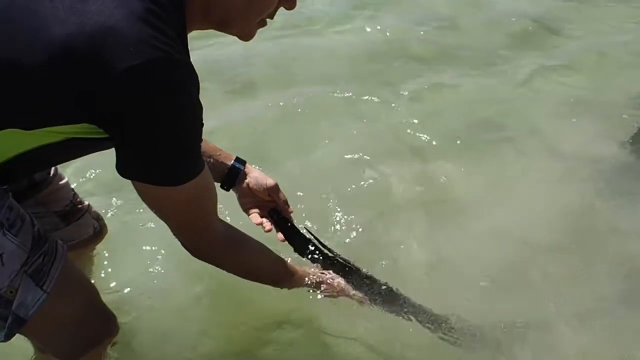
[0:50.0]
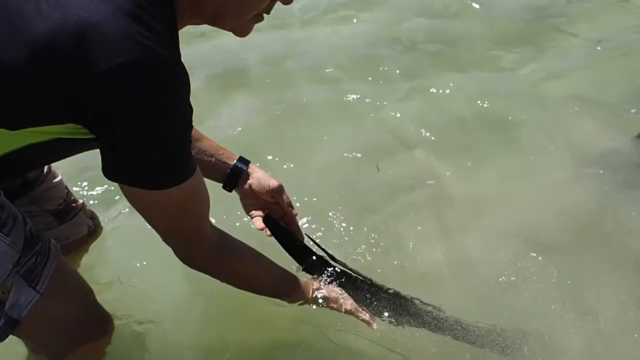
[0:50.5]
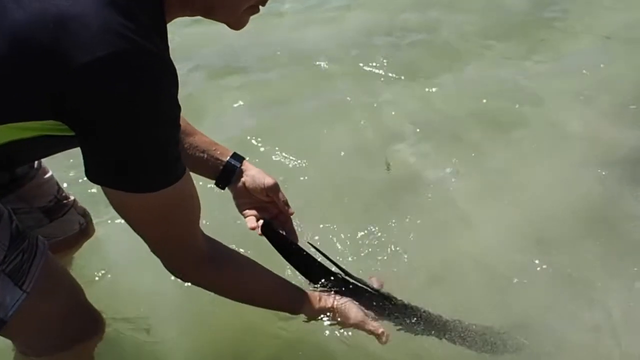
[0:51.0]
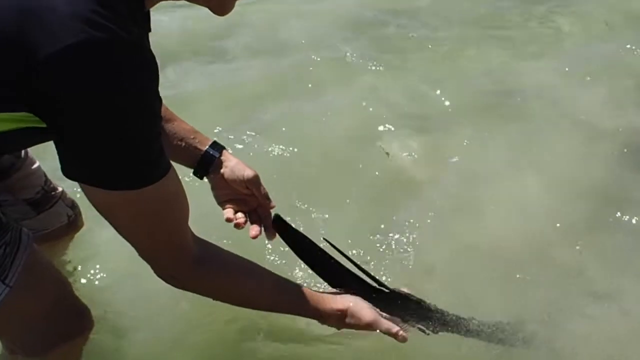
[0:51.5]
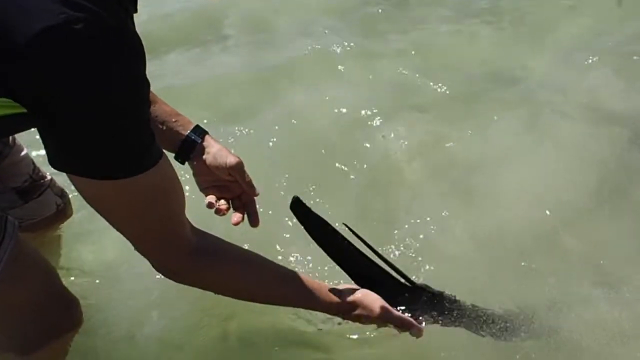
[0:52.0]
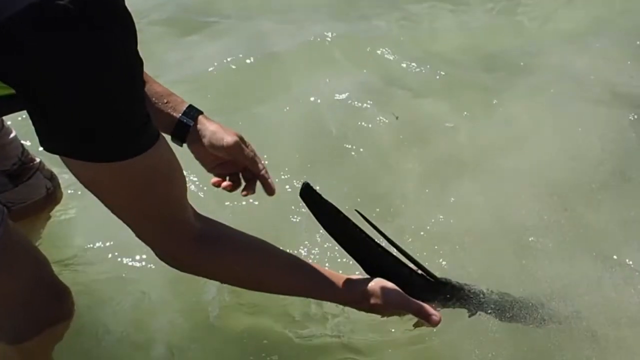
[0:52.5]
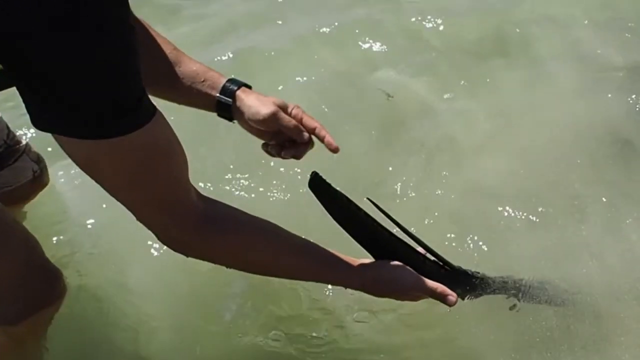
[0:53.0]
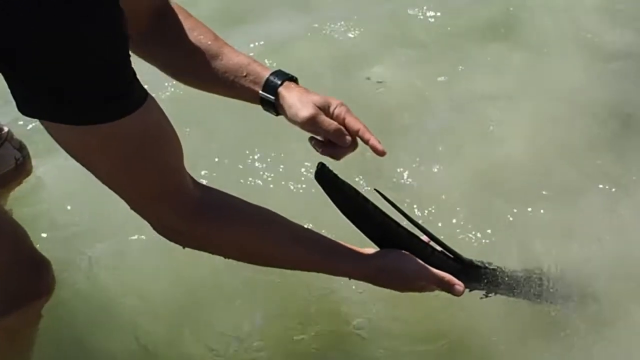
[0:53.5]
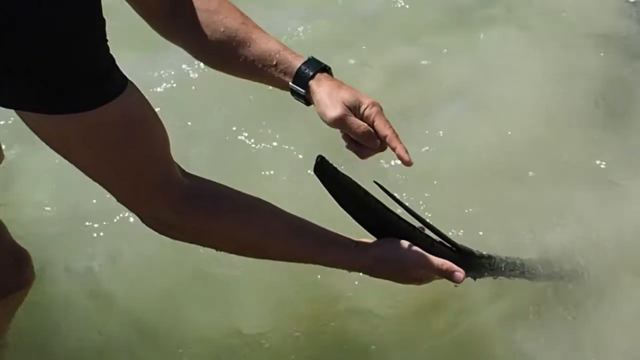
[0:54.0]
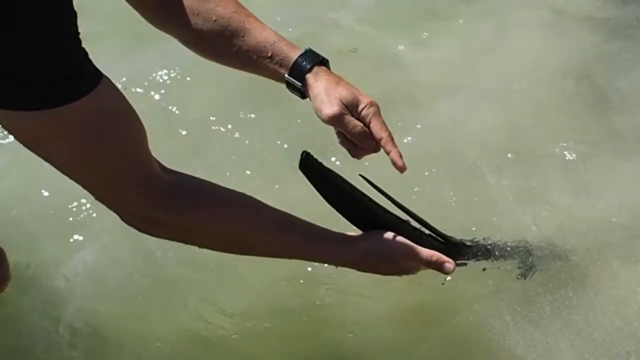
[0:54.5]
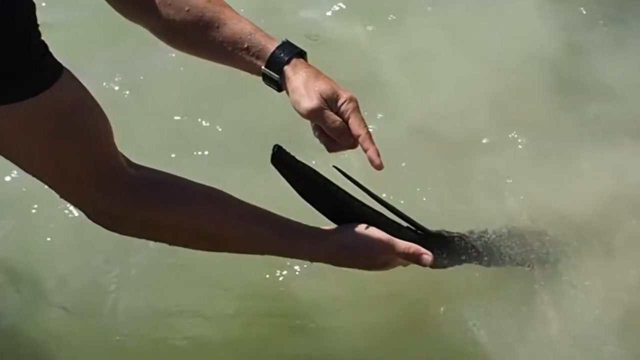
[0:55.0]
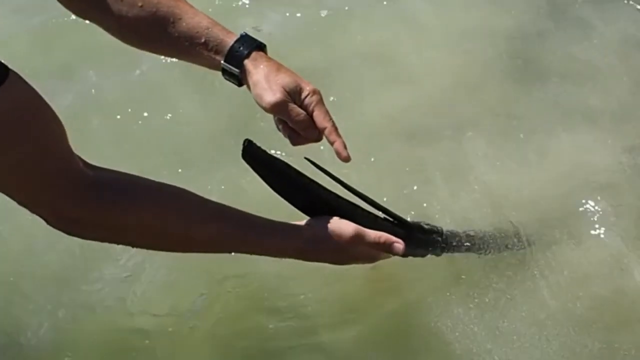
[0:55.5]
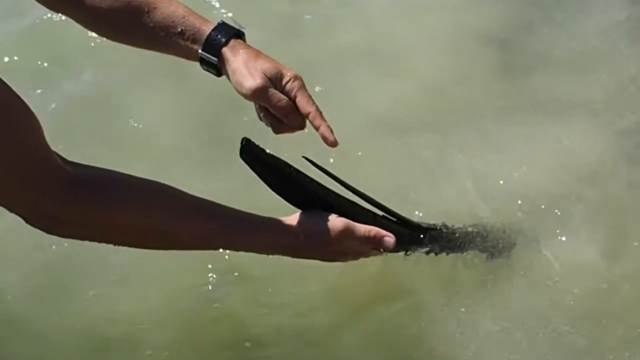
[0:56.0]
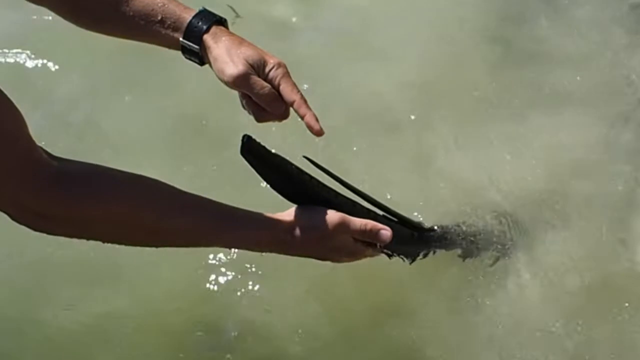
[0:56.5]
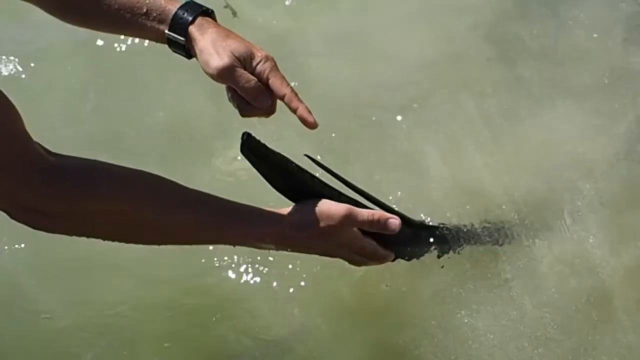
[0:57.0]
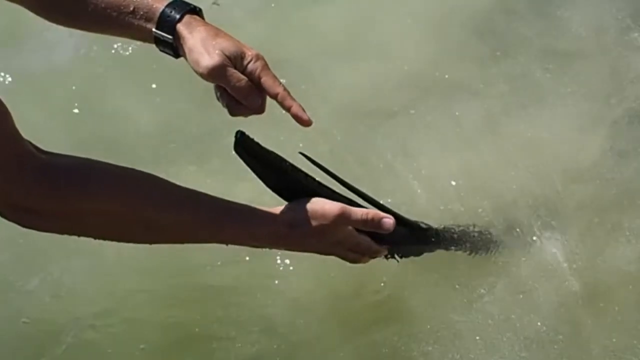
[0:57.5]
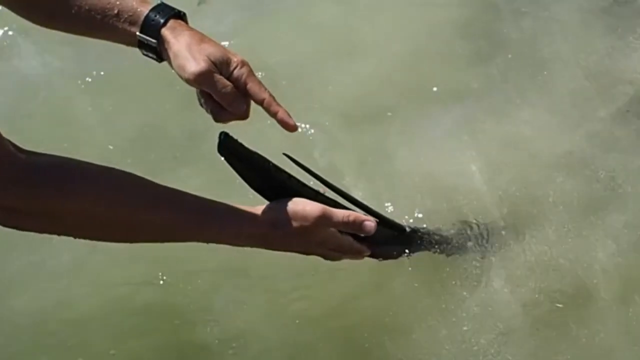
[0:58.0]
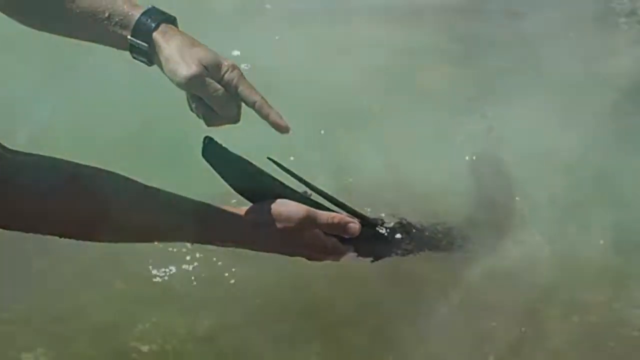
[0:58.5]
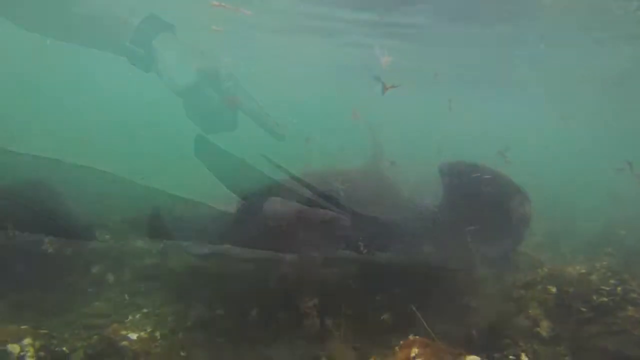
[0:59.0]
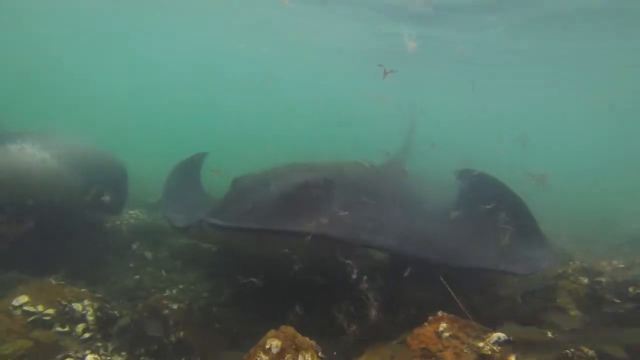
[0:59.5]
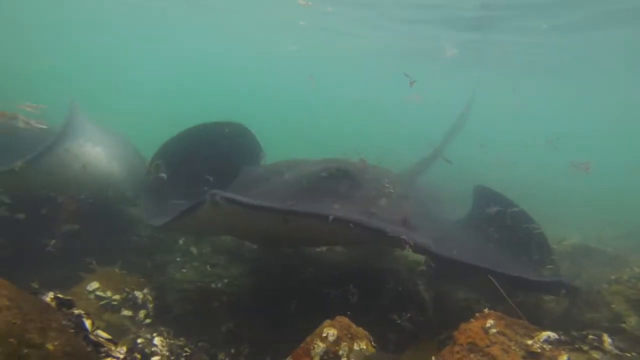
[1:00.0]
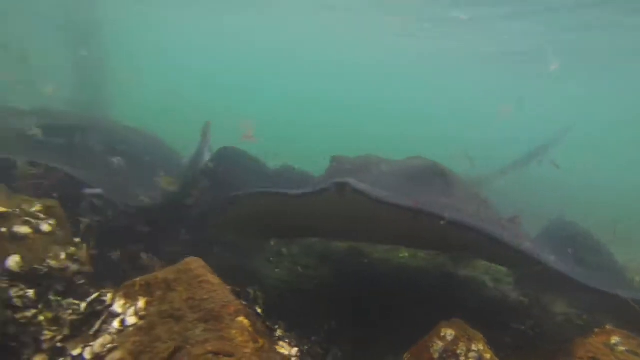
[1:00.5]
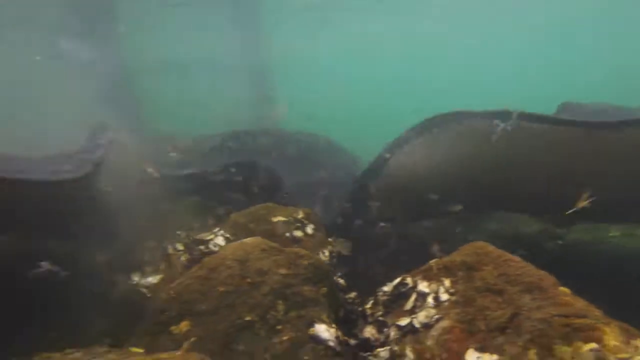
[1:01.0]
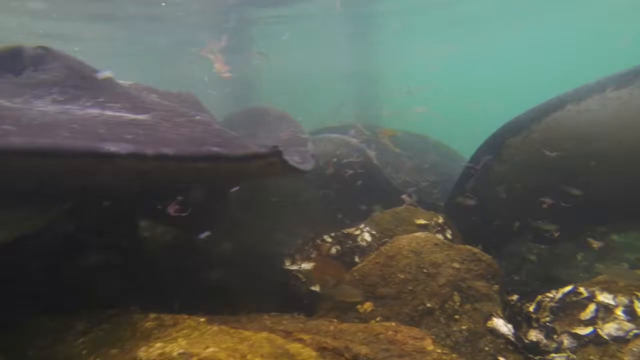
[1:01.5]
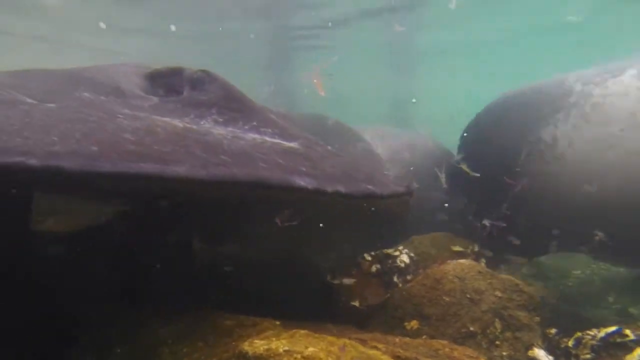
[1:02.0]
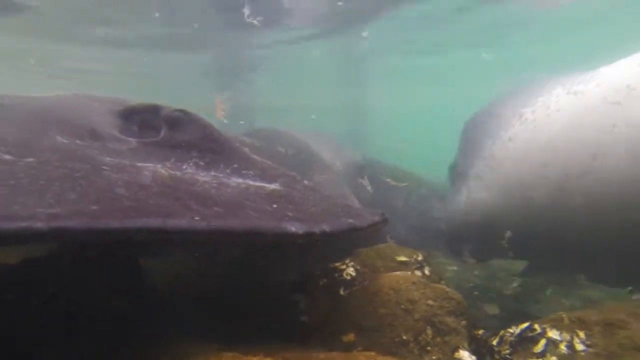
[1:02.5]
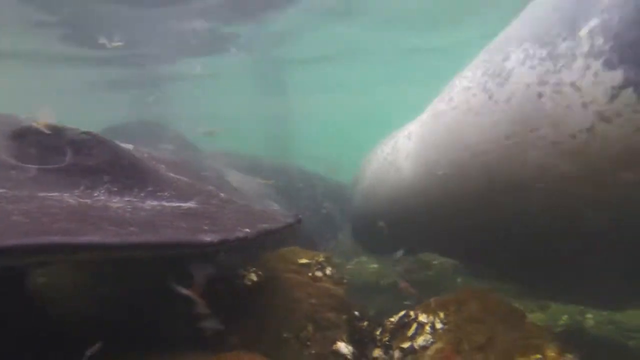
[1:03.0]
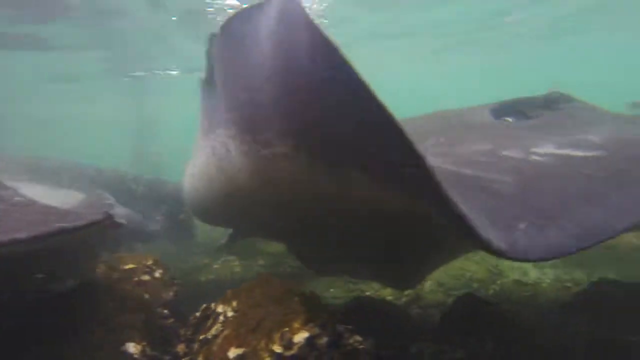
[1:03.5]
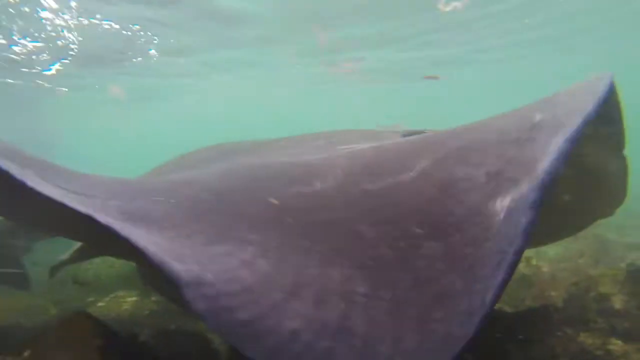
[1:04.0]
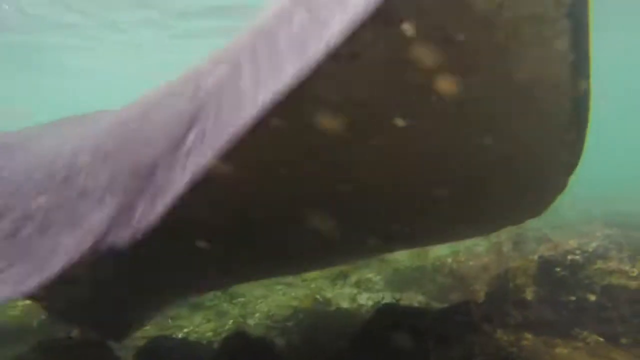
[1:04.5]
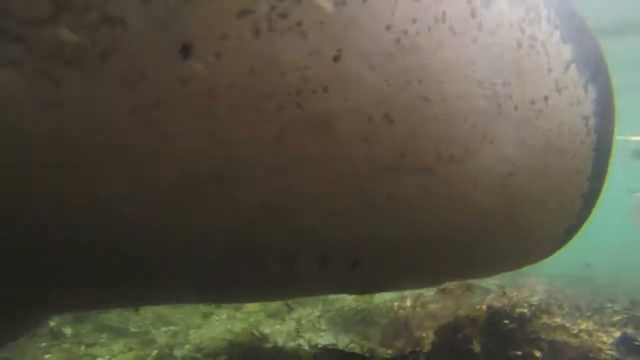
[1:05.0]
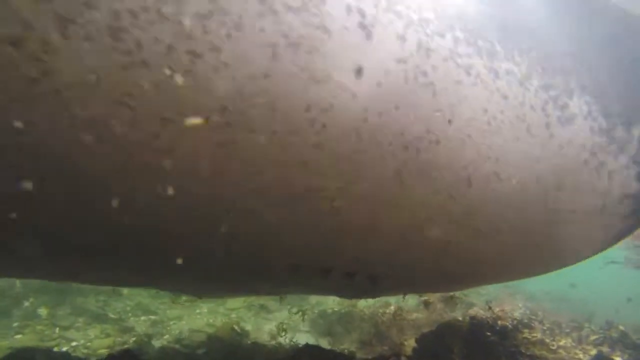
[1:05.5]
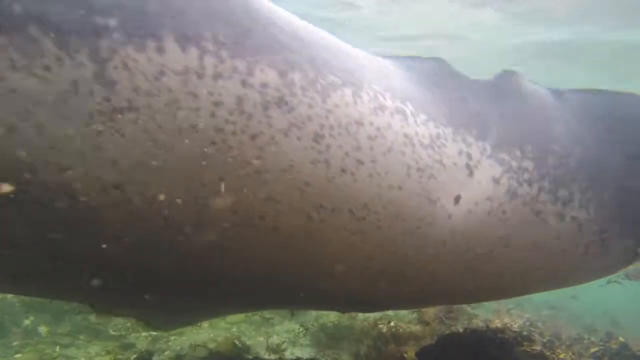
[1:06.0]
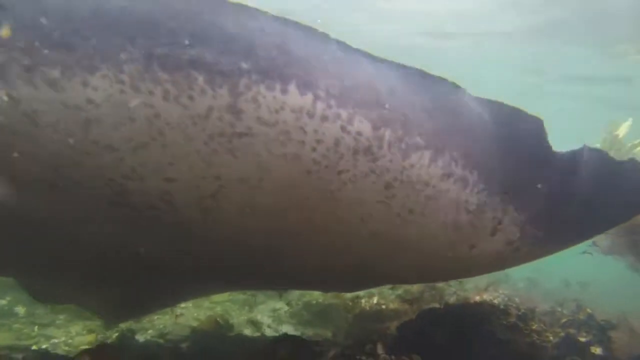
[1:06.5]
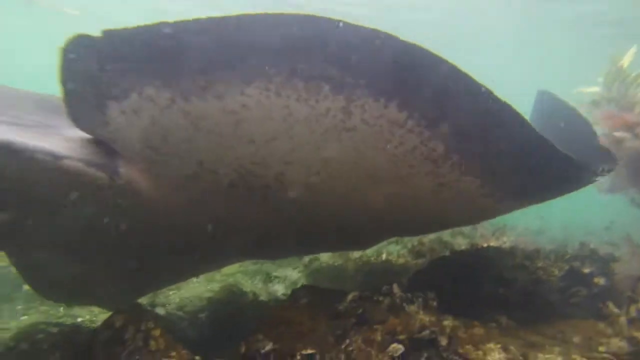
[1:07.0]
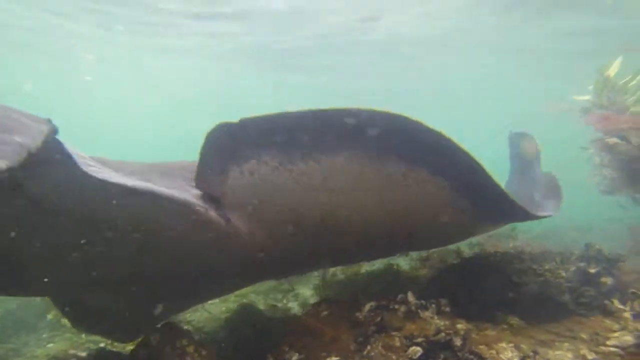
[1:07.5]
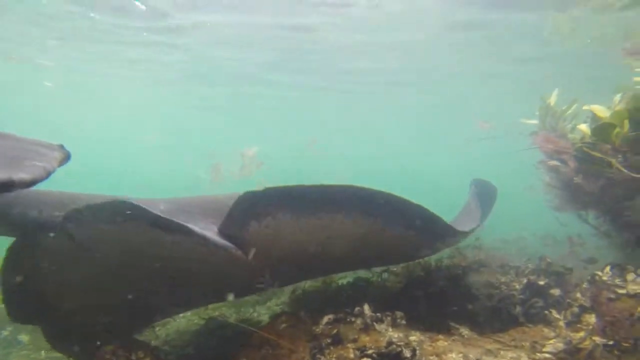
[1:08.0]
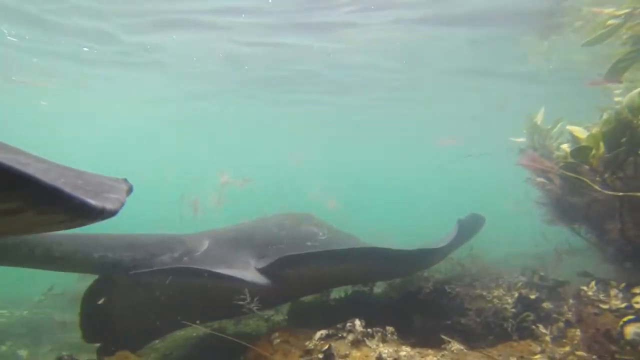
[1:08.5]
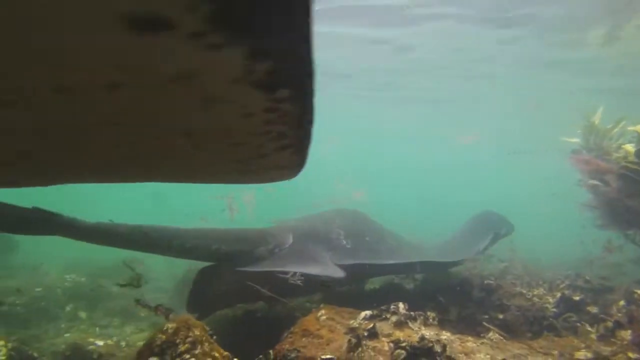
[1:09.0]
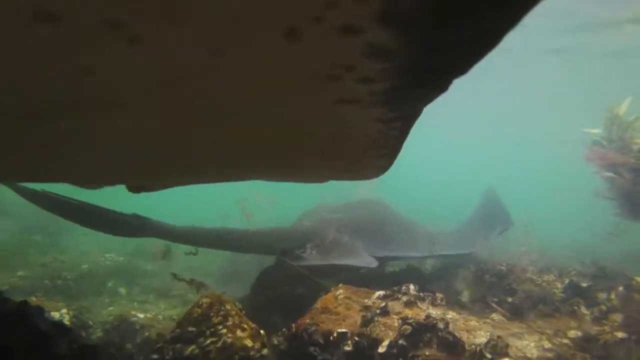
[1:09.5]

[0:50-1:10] Seen above the water, the man looks like he has a black wristwatch on his left arm. He seems to be holding the tail of the stingray. A sort of black rod sticks out of the water with a spike attached to its side. The man holds the stingray's tail at the bottom with his right hand while he gestures at the spike with his left hand, then sort of gets close to the spike, pointing toward it. Another underwater shot shows the stingray sort of swimming underwater, beside another stingray that has been resting sort of above the brownish square rocks. The stingray that swam up turns to its left, which is to the right from the camera's view, as it starts swimming away. The other stingray beside it seems to move a bit as well, possibly trying to follow it, but it does not move completely; it just sort of covers up part of the camera view.